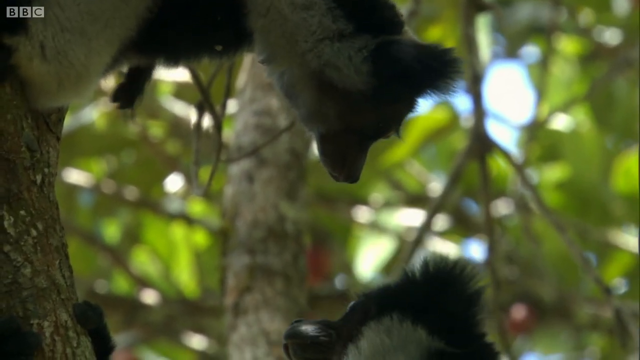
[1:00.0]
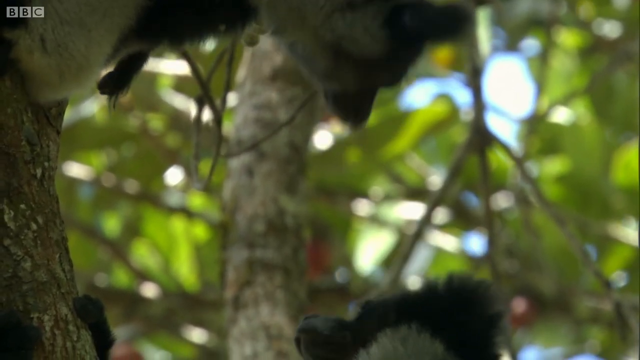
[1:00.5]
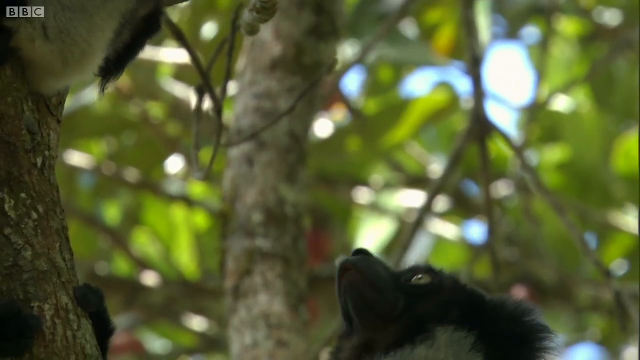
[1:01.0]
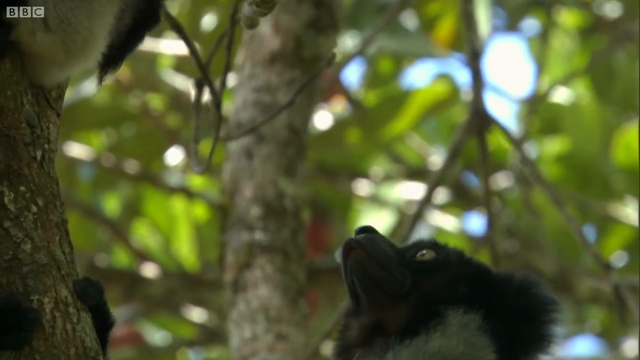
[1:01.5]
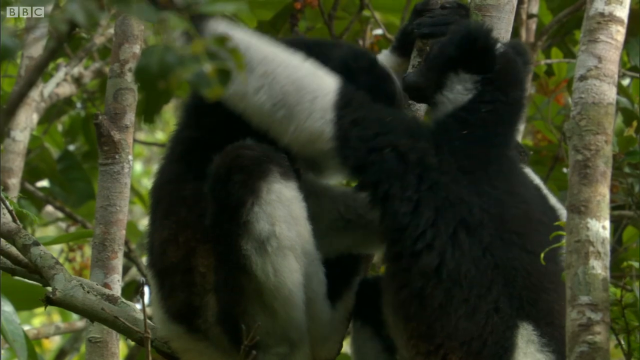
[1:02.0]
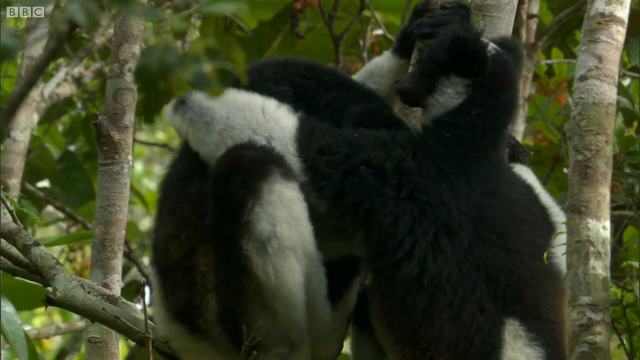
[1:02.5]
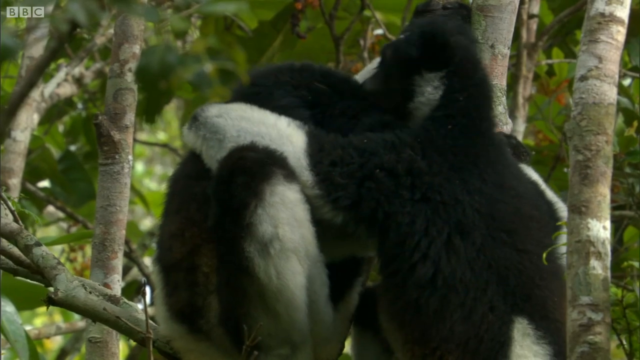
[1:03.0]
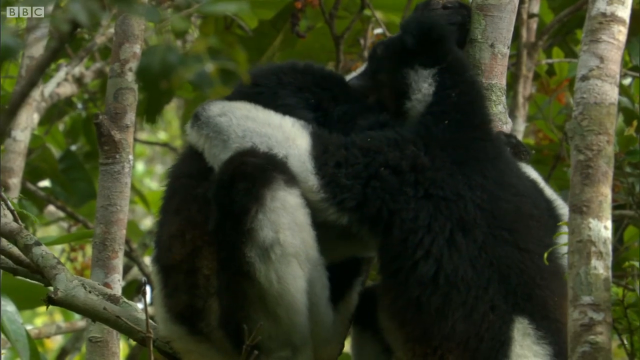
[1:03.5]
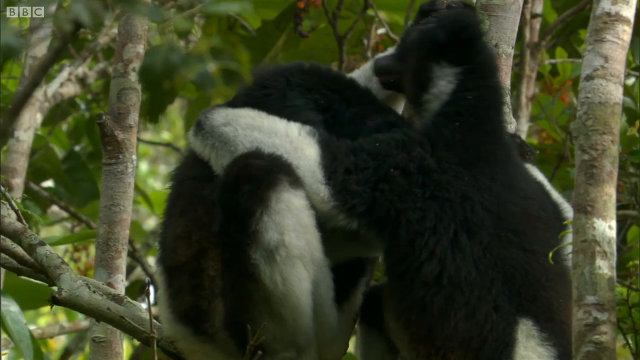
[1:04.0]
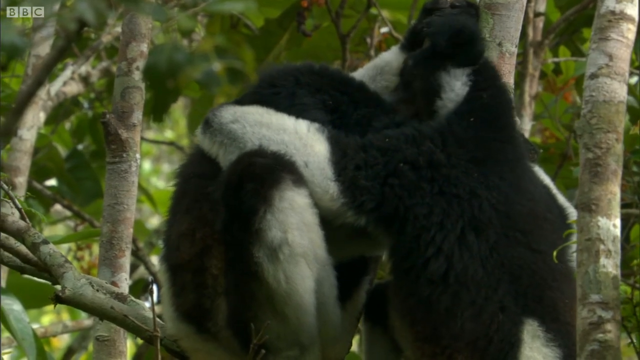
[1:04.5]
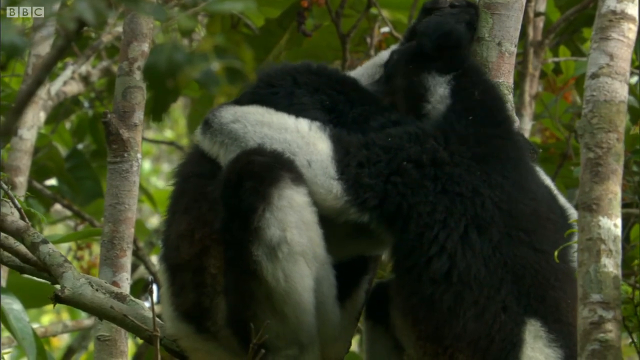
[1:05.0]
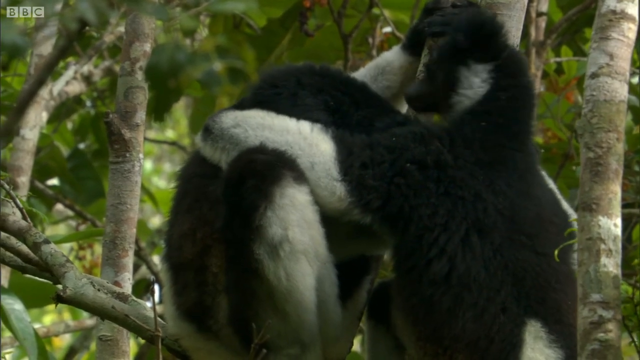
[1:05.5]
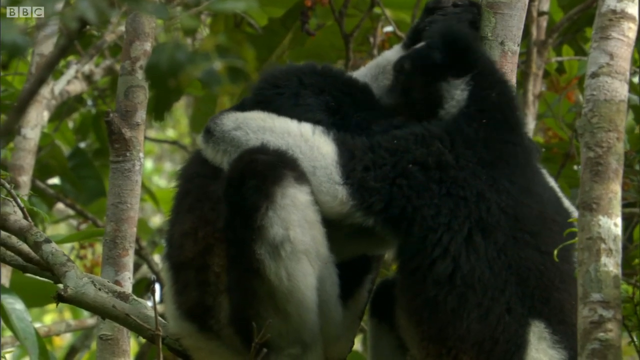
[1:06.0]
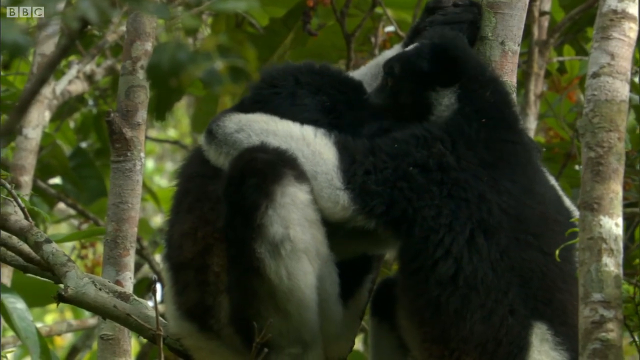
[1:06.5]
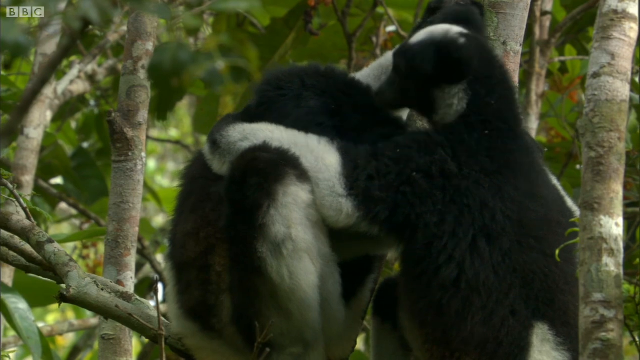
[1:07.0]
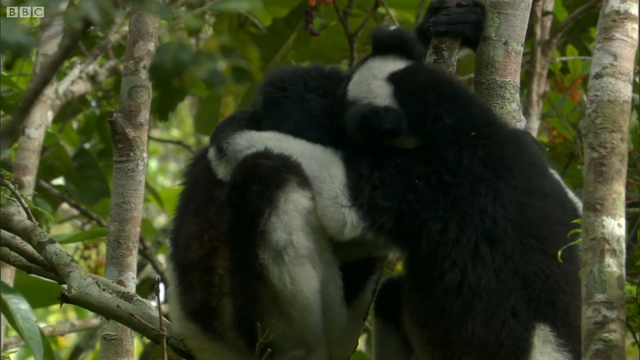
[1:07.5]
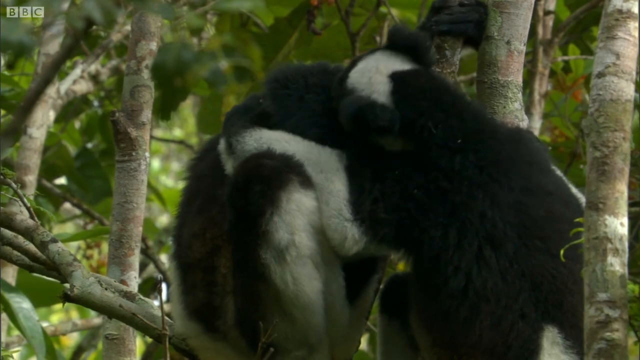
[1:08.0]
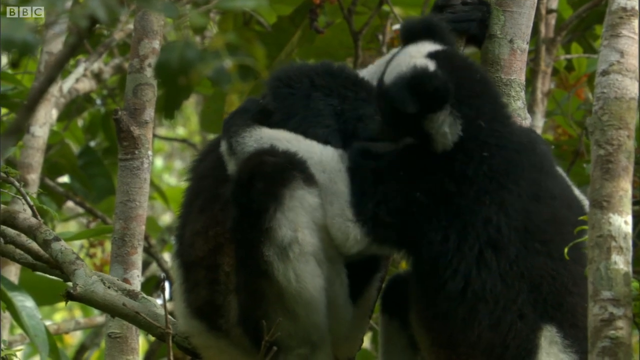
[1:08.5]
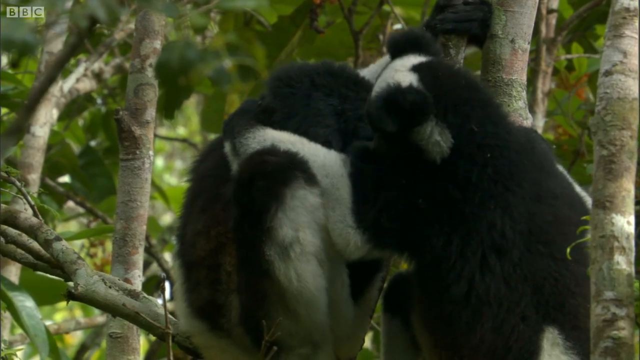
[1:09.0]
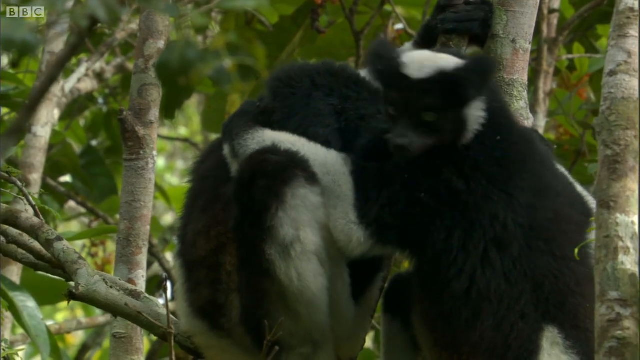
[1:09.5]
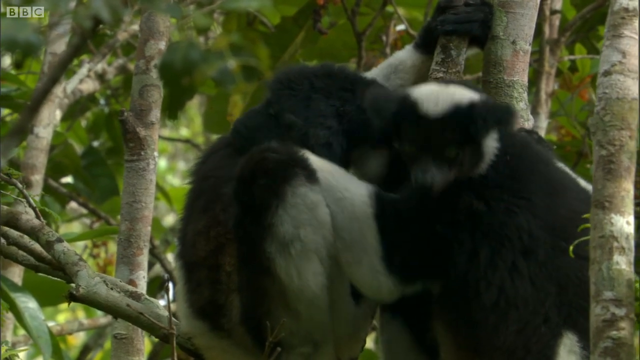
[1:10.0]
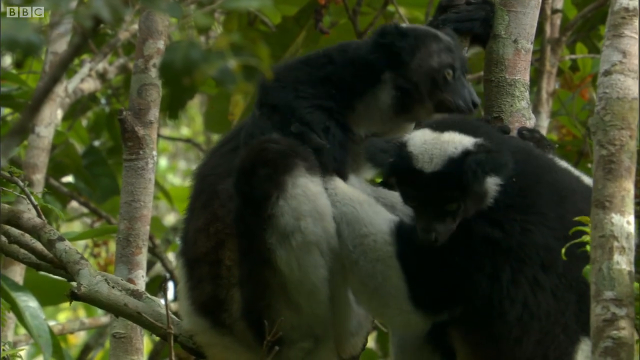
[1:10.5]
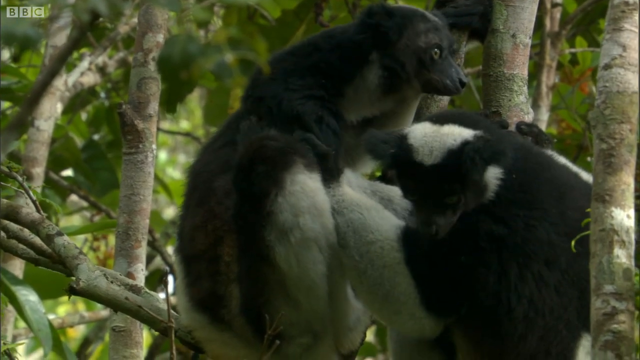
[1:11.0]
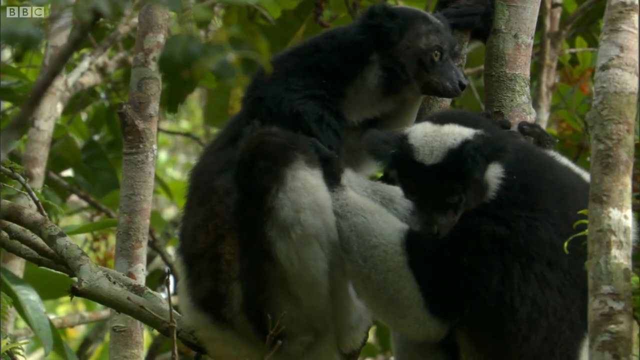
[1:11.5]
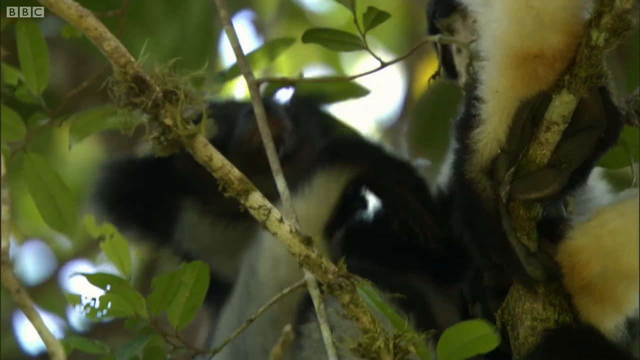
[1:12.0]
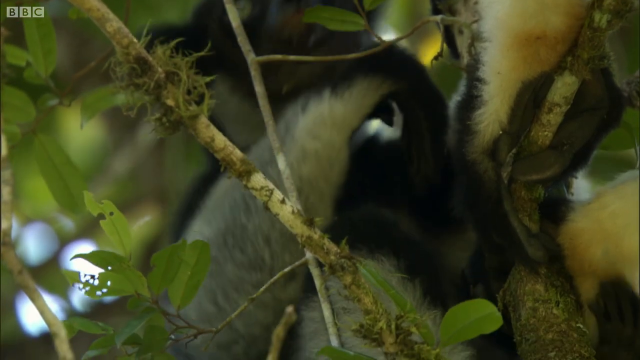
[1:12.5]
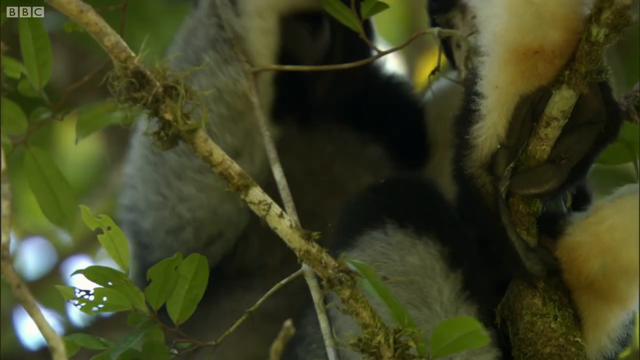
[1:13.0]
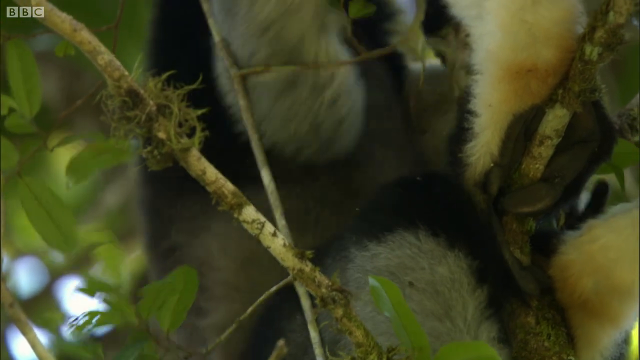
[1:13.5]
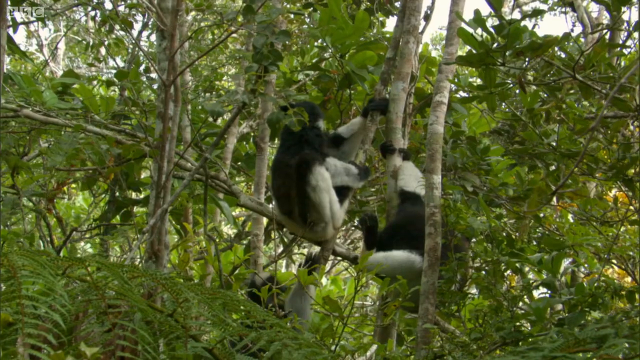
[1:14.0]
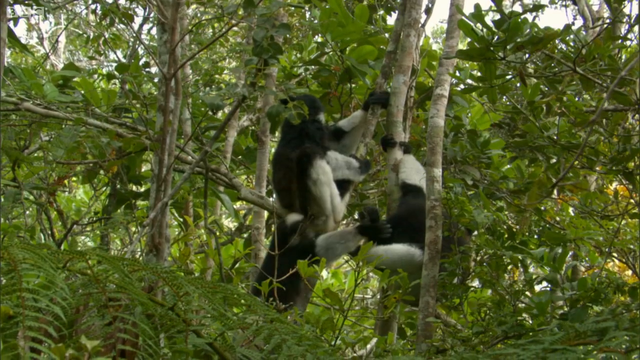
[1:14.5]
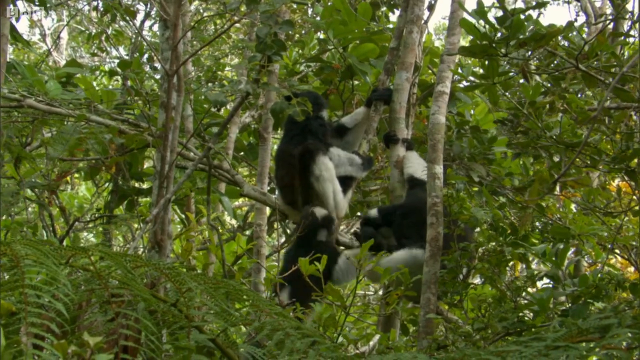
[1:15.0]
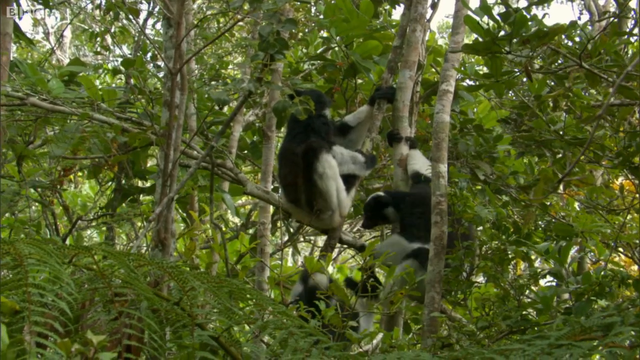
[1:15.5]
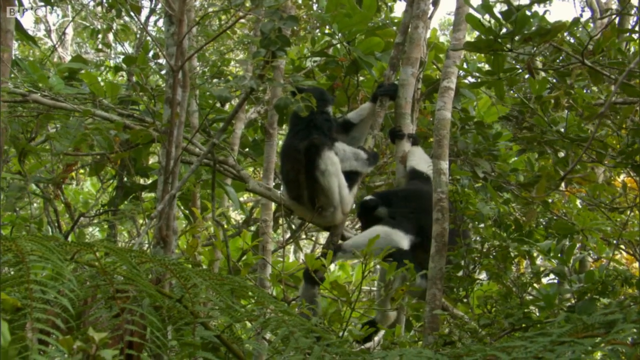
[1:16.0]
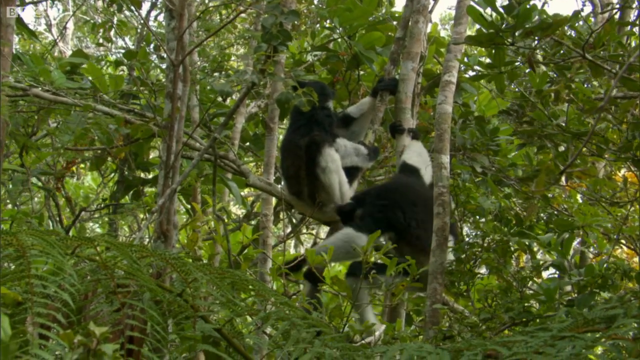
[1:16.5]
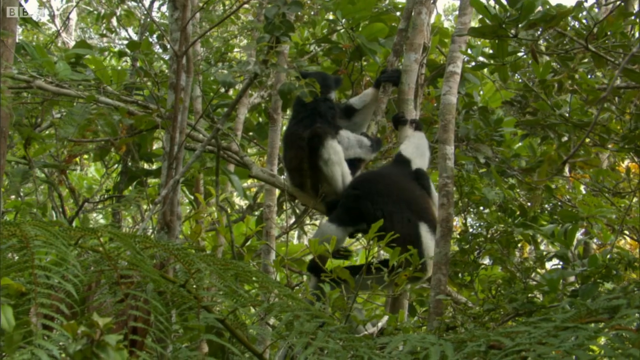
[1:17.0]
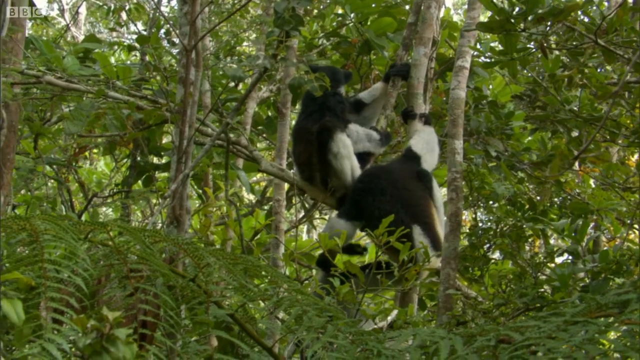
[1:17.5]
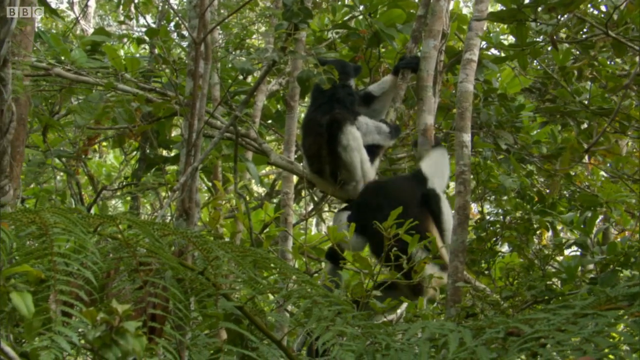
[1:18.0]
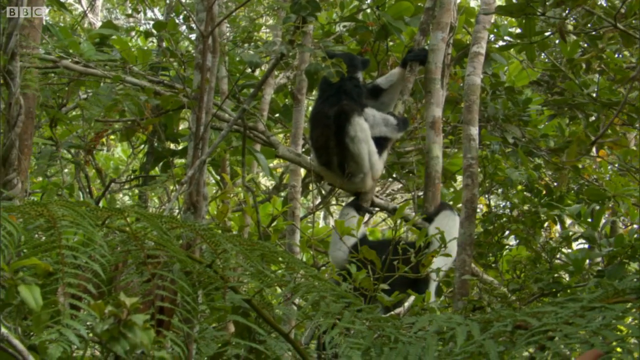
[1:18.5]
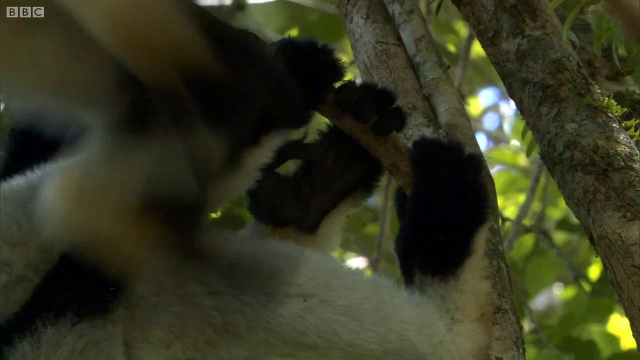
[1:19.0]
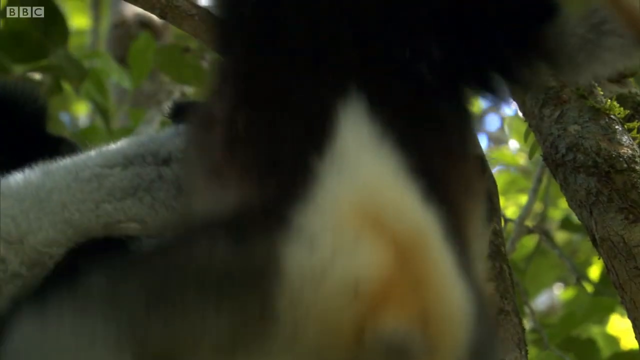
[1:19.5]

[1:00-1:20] A close-up shows two lemurs that seem to be looking at each other, maybe communicating. A farther view then shows two lemurs, possibly the same ones, grooming each other. A third lemur climbs up a tree, apparently approaching the other two. It grabs a branch and then the foot of one of the other lemurs, which slides down the branch a little. A close-up then shows the lemur that approached and the lemur that slid down. They are still in the trees.